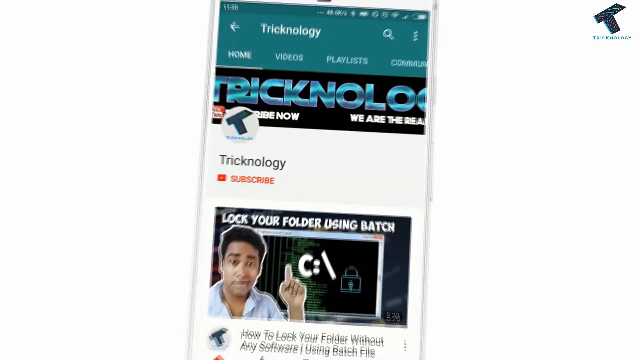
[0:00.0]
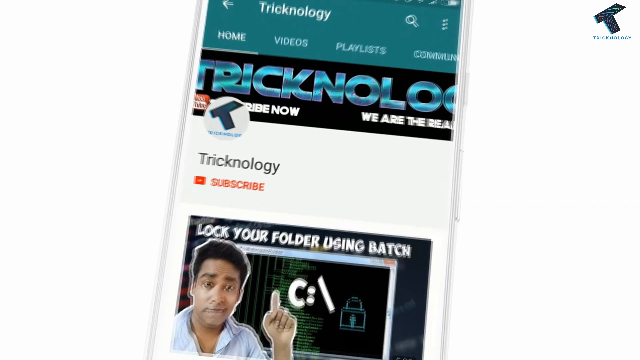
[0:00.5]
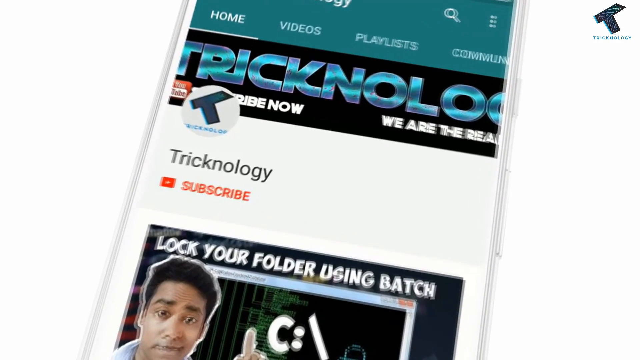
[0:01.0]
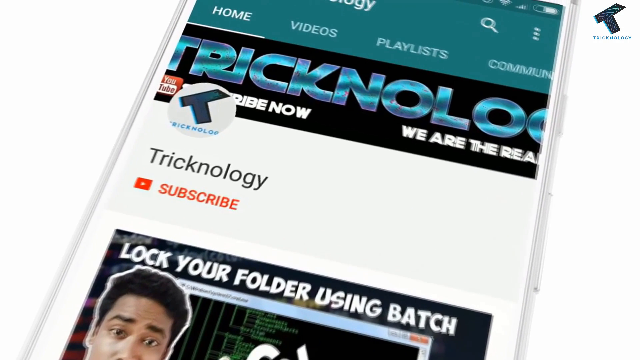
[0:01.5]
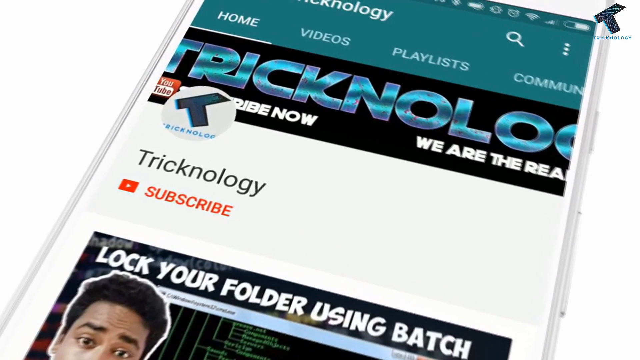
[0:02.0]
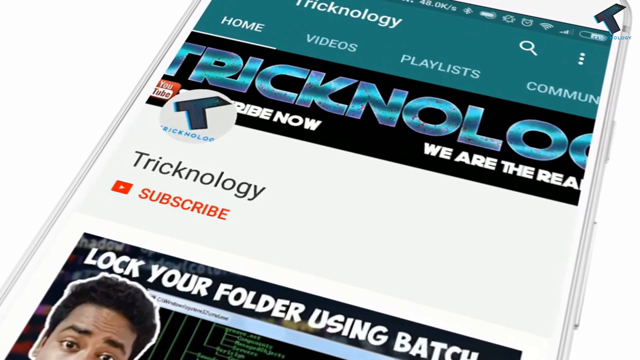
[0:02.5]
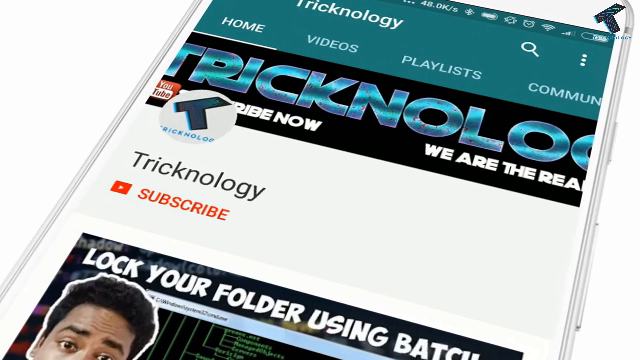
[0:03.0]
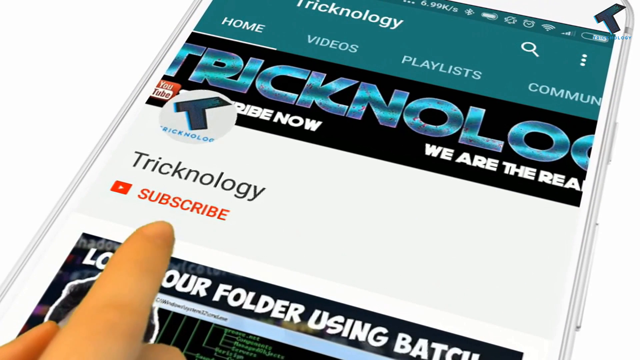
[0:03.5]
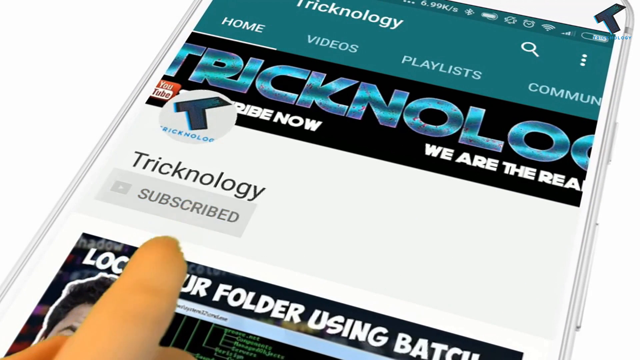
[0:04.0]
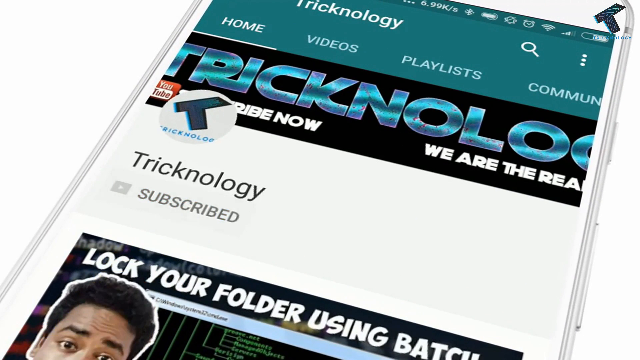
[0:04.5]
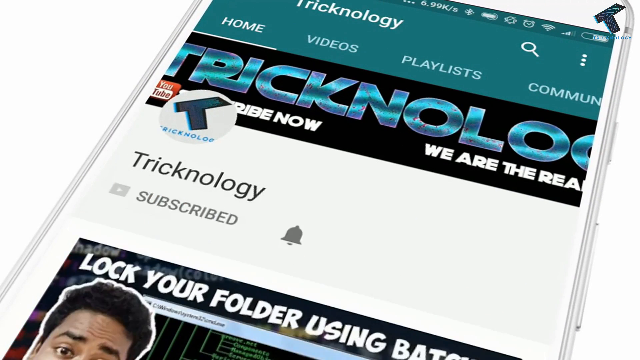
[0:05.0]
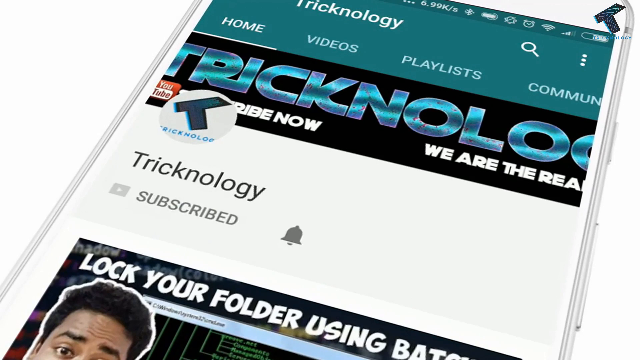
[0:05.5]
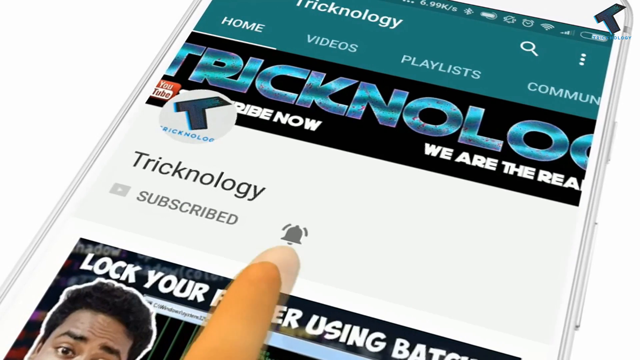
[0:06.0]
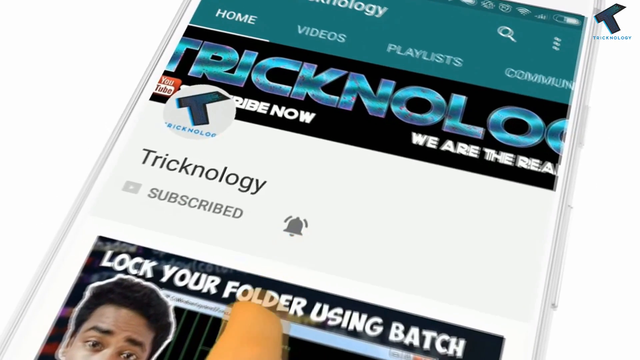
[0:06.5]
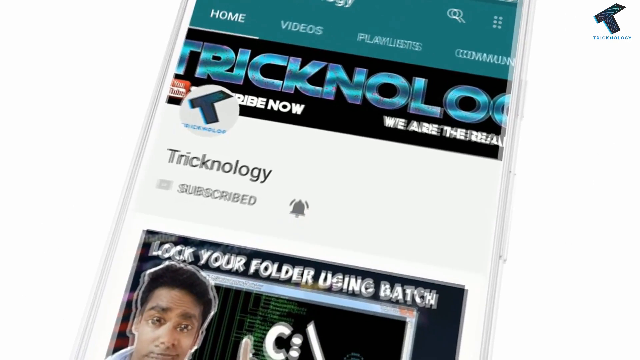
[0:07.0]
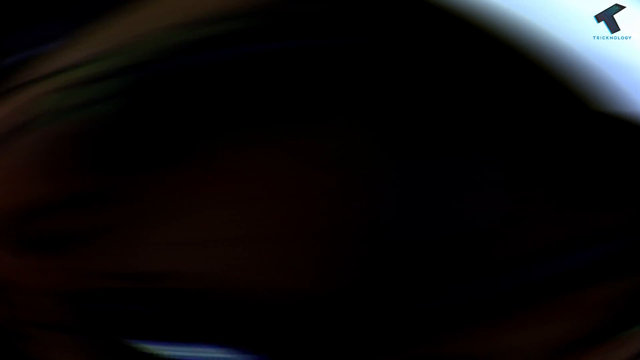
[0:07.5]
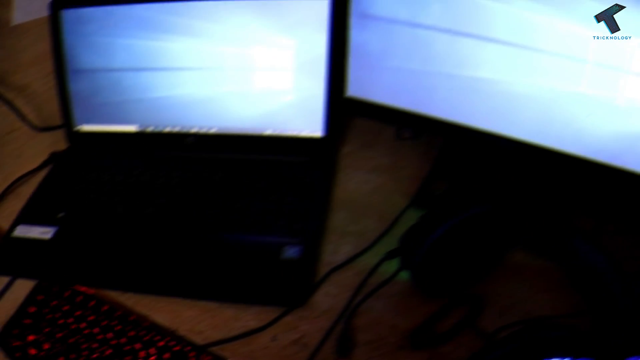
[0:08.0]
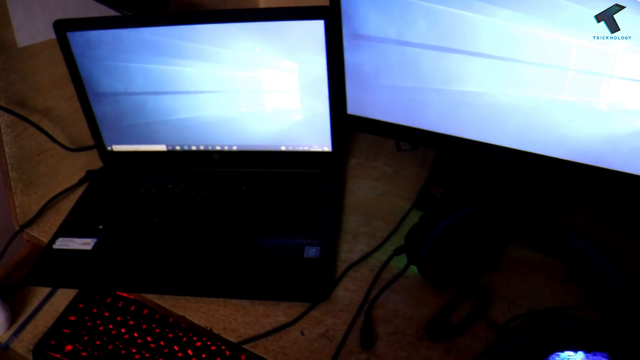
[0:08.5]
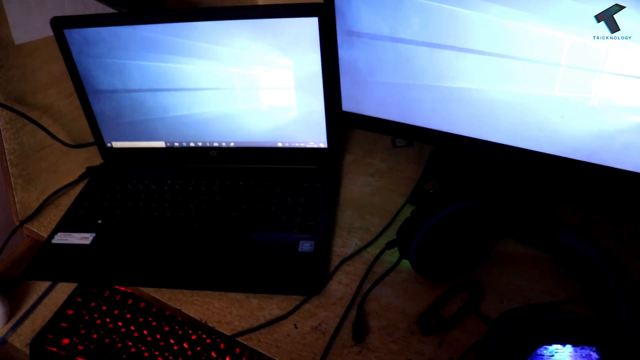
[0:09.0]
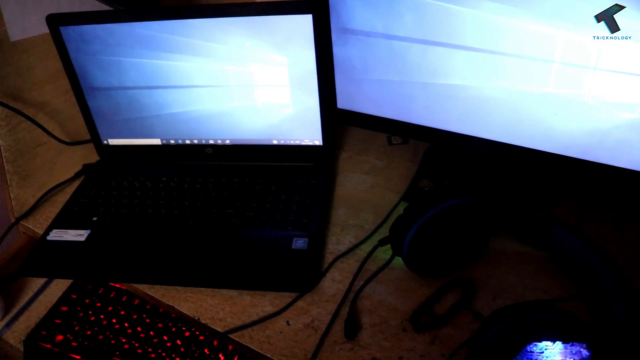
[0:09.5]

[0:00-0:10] A tablet shows the name "Tricknology", which appears to be a channel. The camera zooms in to the name, and a finger taps a button that says "Subscribe". Once it changes to "Subscribed", a bell icon appears beside it, most probably meaning notifications are enabled. The finger touches the bell icon and the camera zooms out. The video then transitions to an open laptop that is turned on, placed on top of a brown desk.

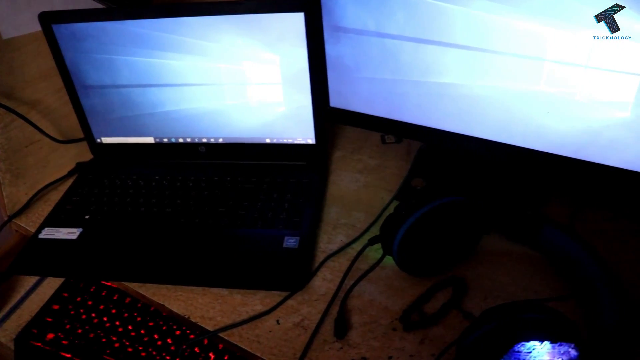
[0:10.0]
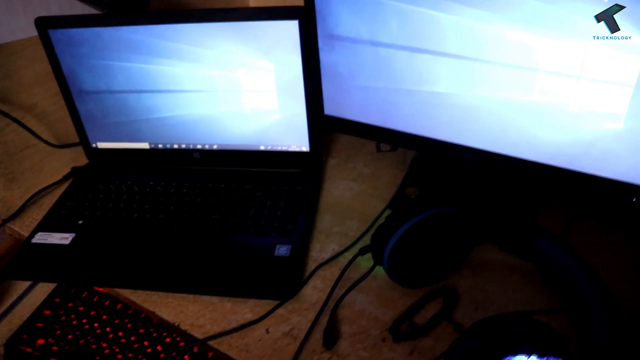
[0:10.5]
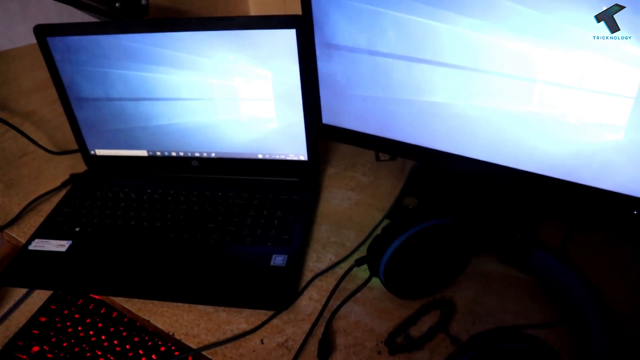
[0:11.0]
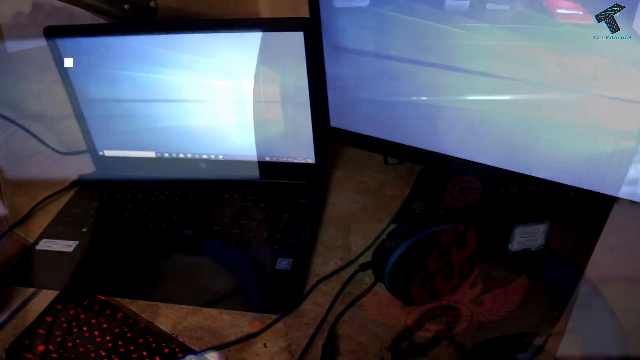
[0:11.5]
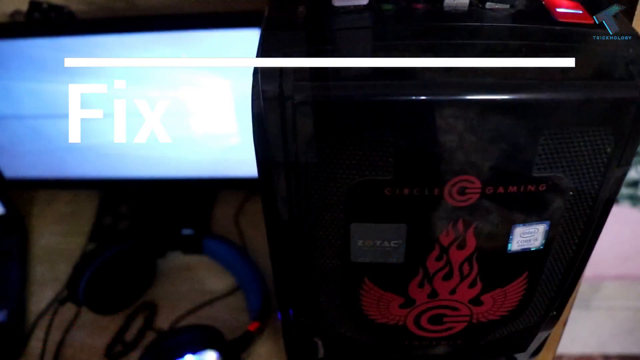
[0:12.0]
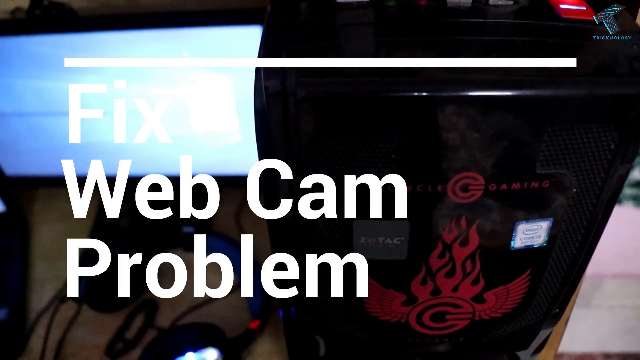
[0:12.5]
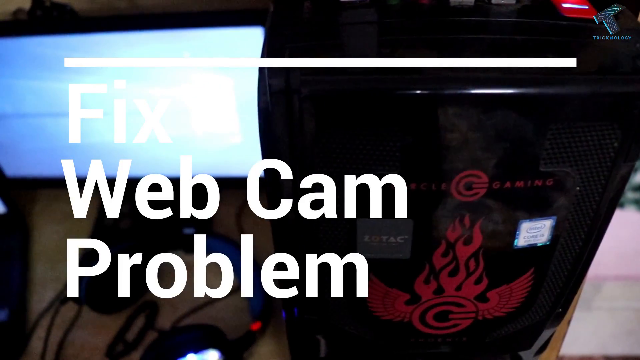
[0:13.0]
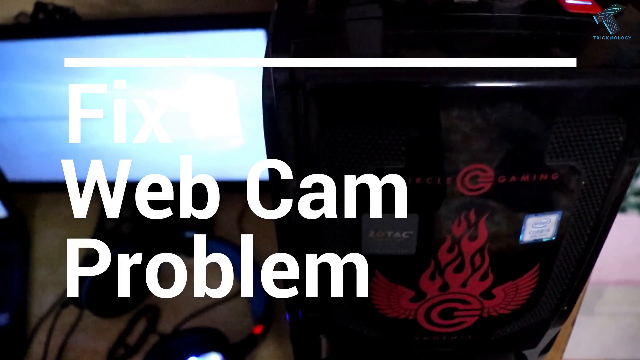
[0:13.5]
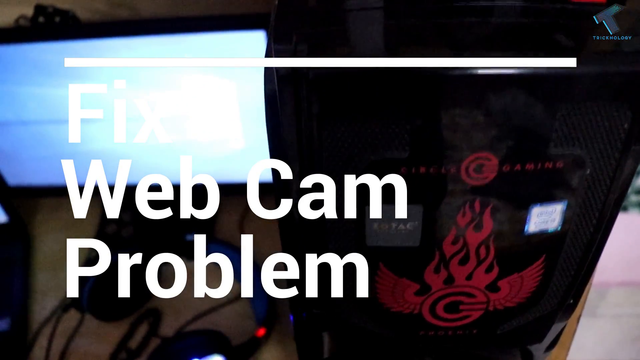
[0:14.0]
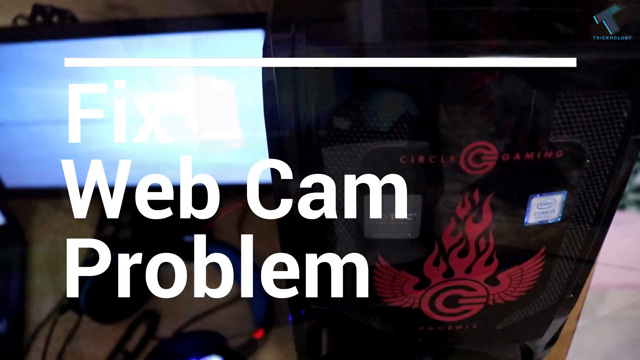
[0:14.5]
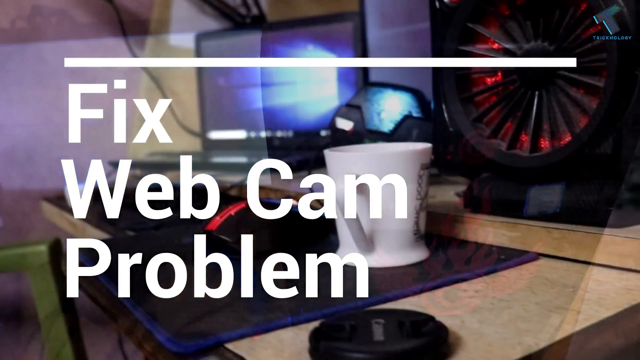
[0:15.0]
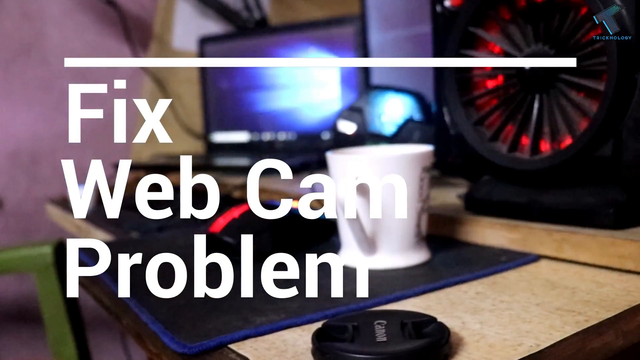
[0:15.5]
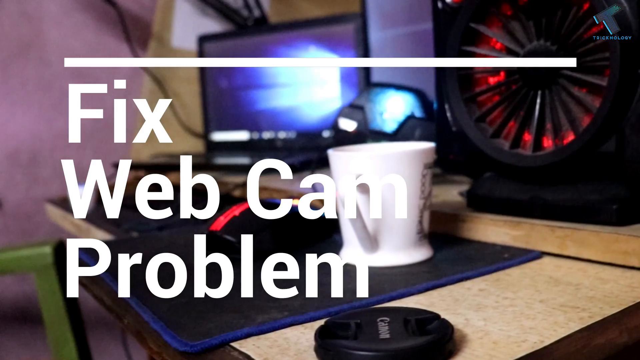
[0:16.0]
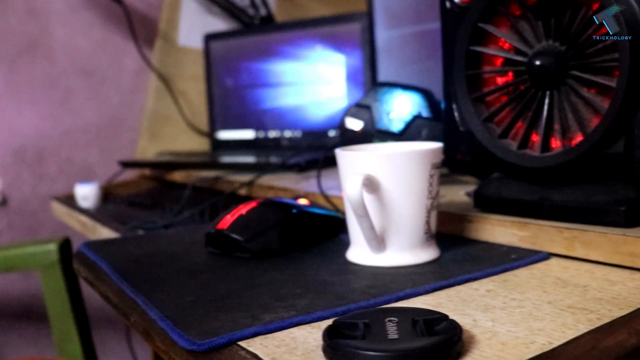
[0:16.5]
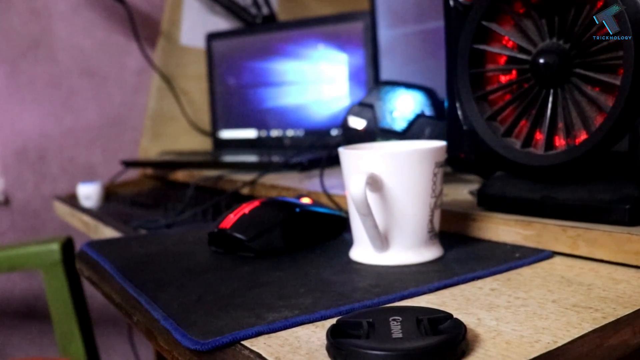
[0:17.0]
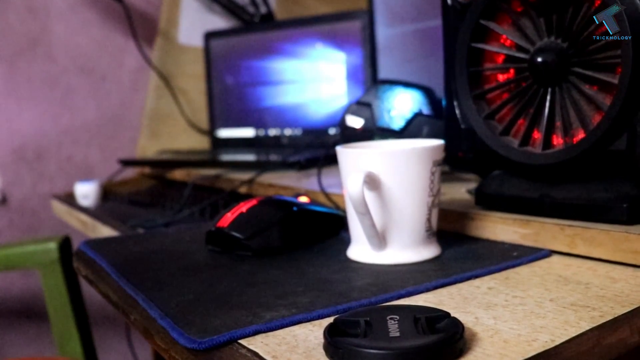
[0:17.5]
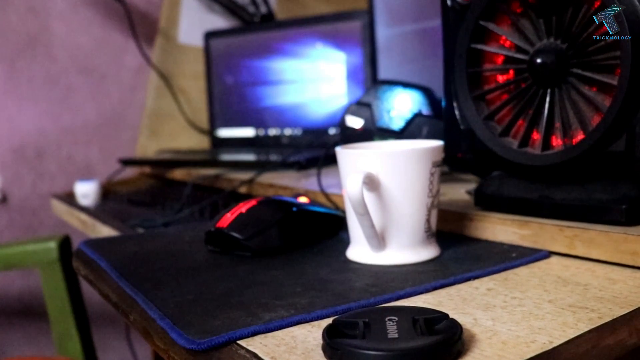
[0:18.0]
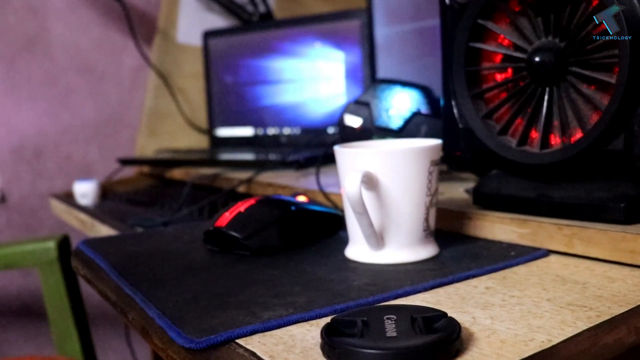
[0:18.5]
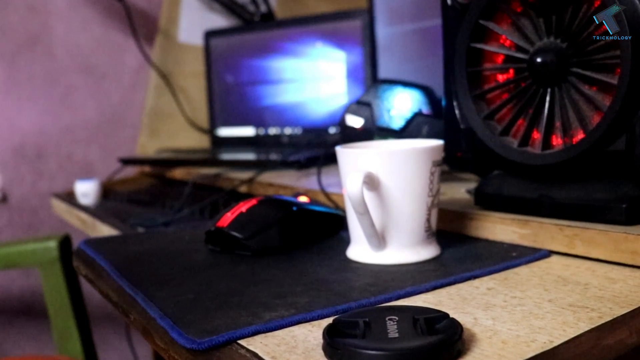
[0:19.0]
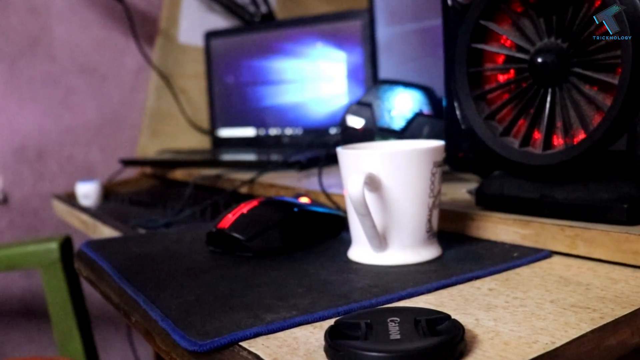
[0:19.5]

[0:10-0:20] The open laptop, turned on, rests on top of a desk. The video transitions to a screen showing the text "fix webcam problem" in a big font. Next comes a view of the desk with the laptop in the background, a fan beside it, a mouse on a mouse pad, and a white coffee mug beside the mouse. This transitions to a sort of Microsoft-style logo in neon blue that kind of sends neon blue light across the whole screen.